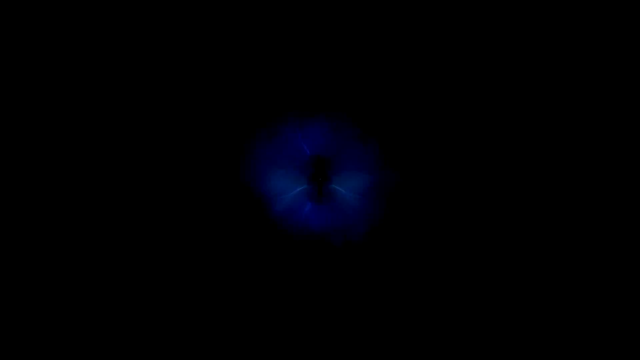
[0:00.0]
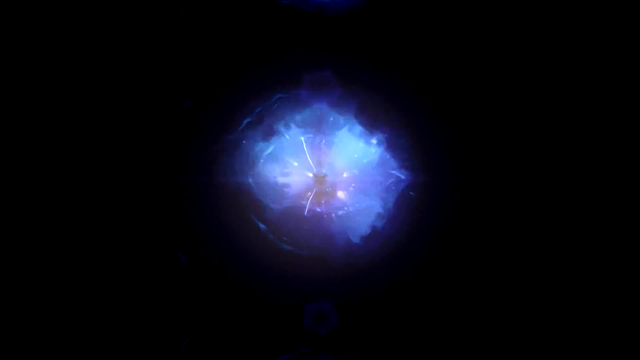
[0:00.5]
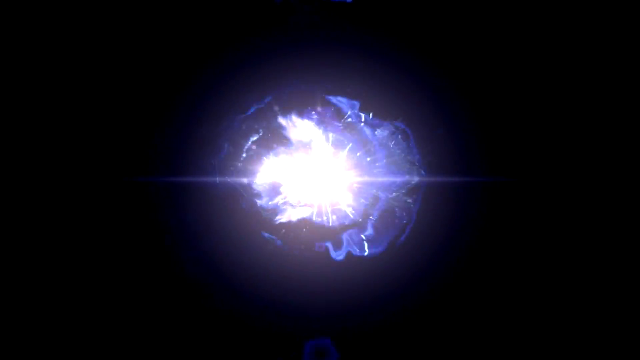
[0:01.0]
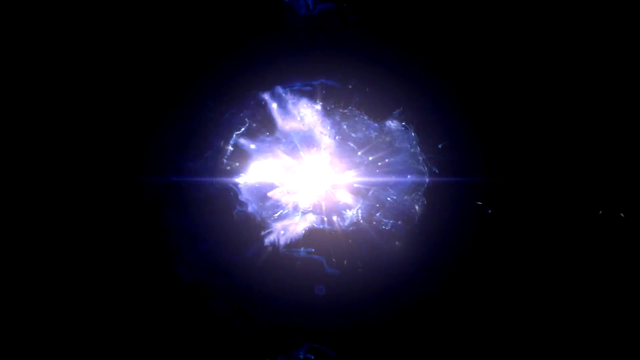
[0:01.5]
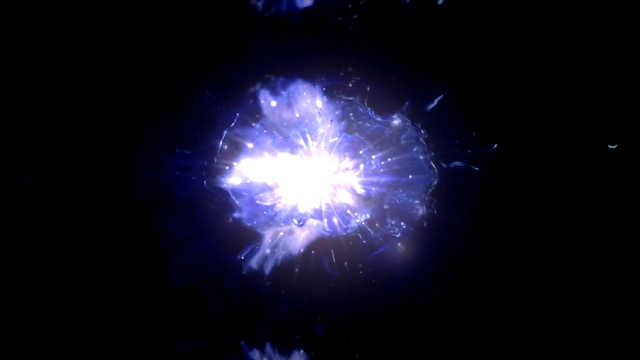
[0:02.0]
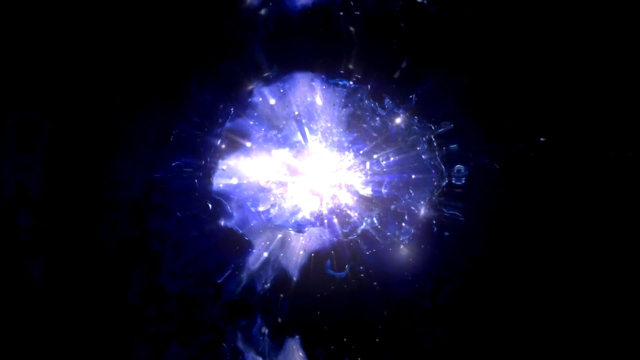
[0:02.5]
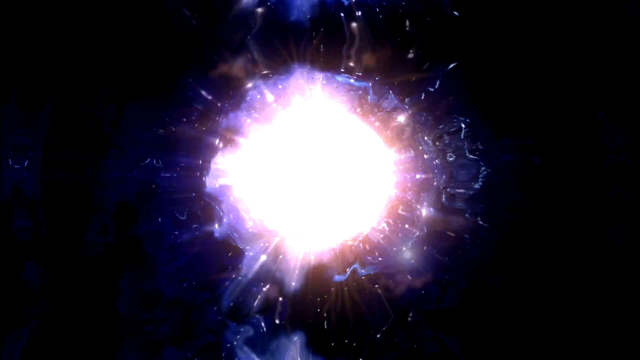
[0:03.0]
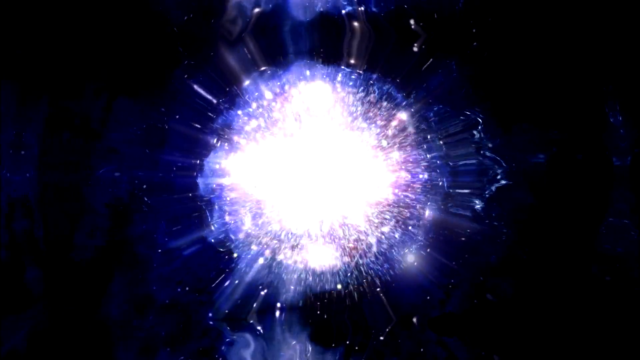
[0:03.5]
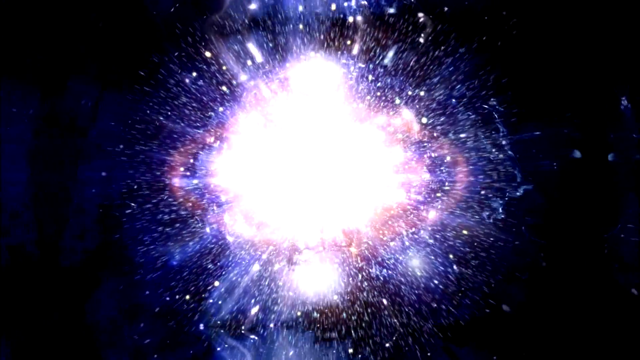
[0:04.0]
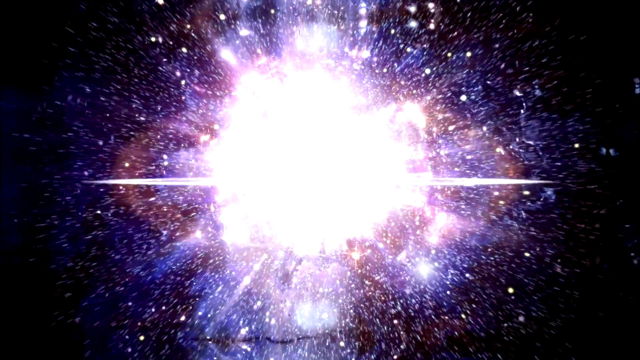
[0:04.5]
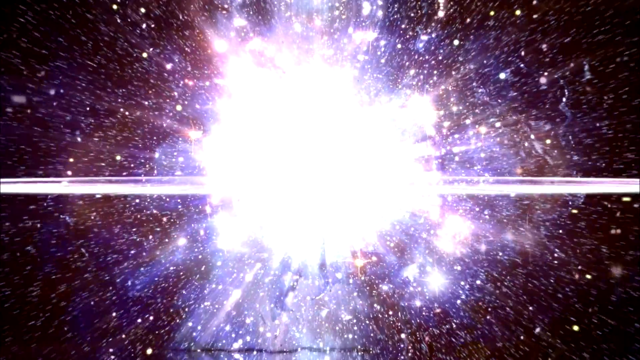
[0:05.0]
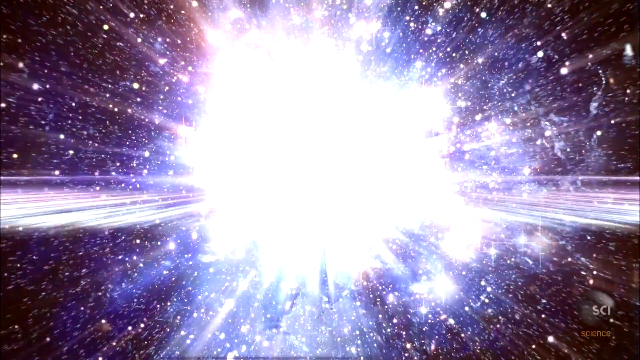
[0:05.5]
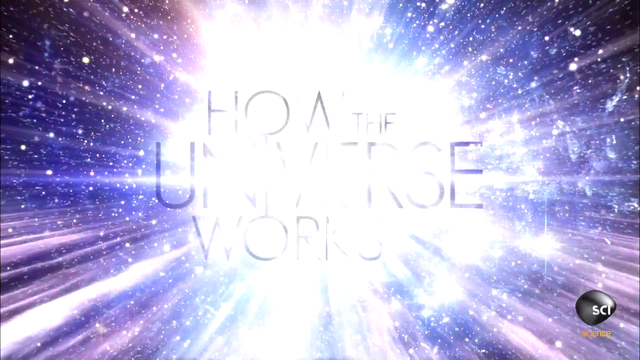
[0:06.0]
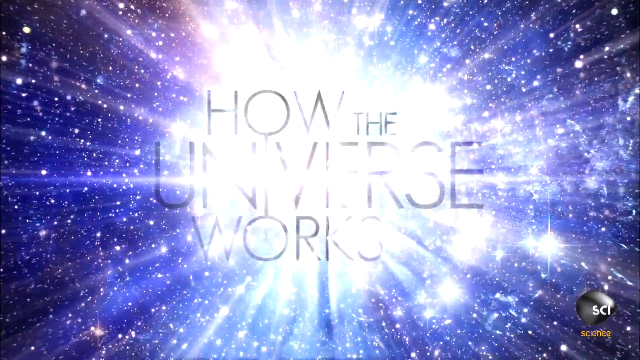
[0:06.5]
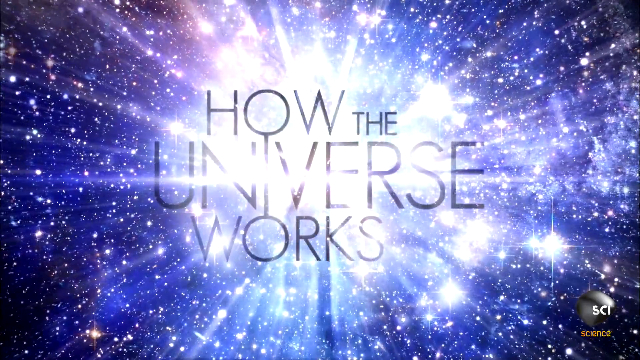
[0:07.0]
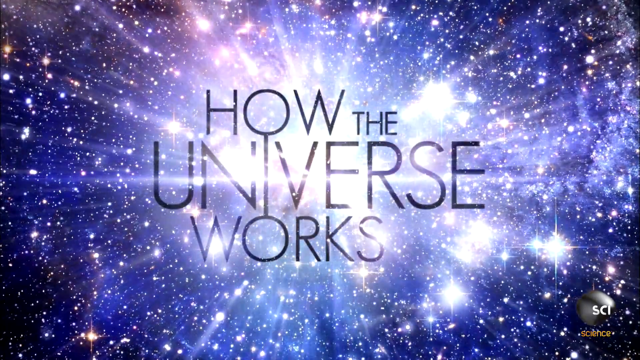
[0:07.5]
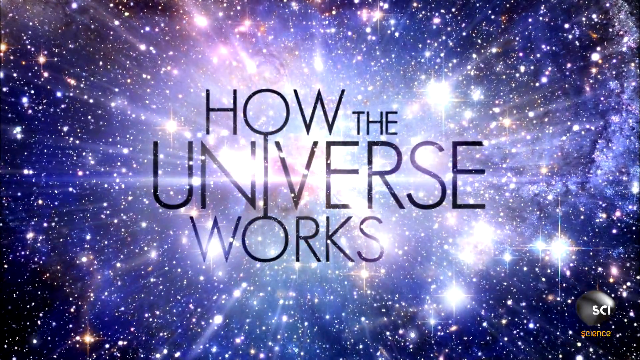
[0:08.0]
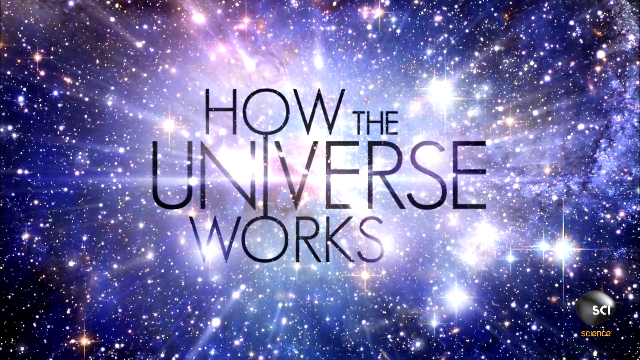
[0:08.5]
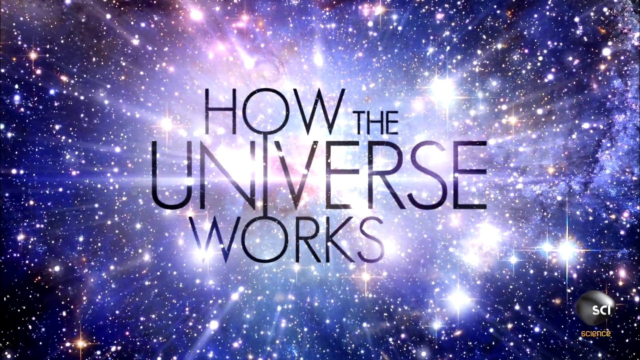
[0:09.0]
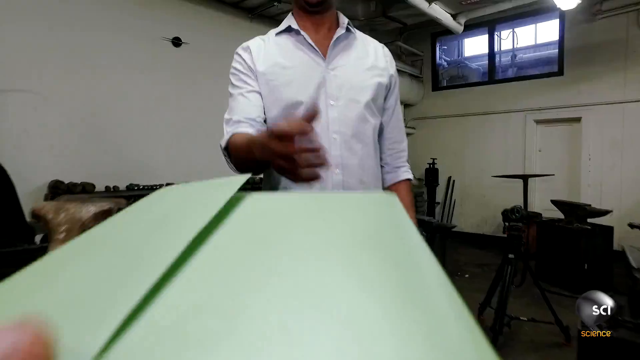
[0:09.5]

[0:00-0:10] Against a black, empty background, a bright burst of energy and electricity in the center explodes outward into a representation of the cosmos. In the middle of this effect is black text reading "How The Universe Works". The scene shifts to the interior of an ordinary-looking room with white walls, where two sets of people are visible. On the camera's side, a hand holds a green envelope or piece of paper, and across from the hand is a man in a white shirt and dark pants.